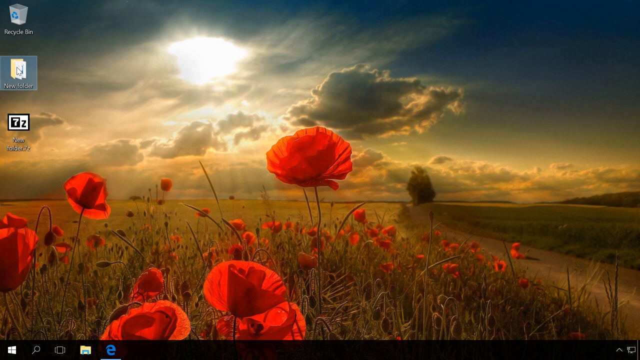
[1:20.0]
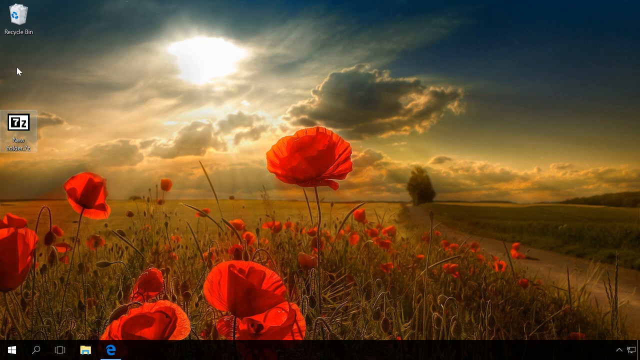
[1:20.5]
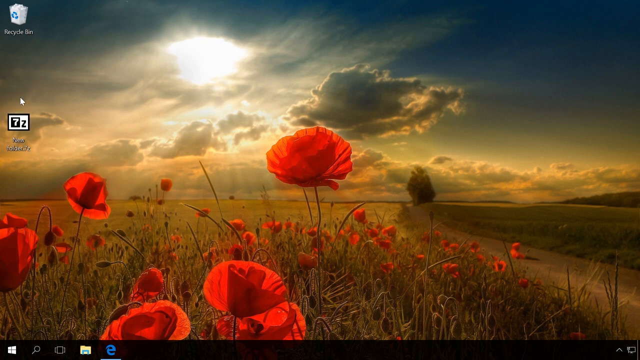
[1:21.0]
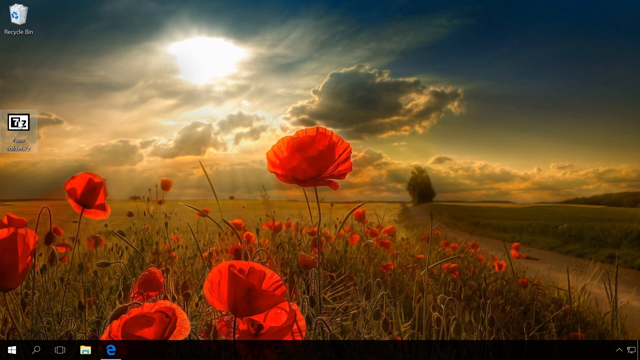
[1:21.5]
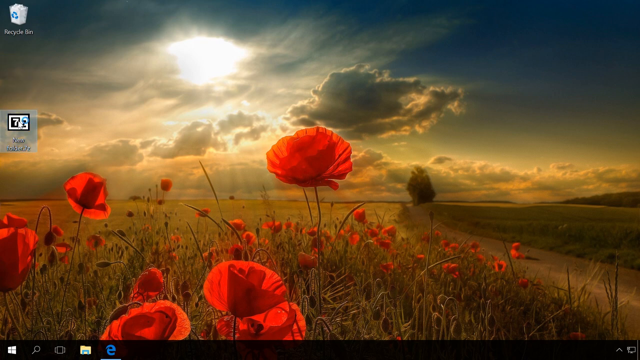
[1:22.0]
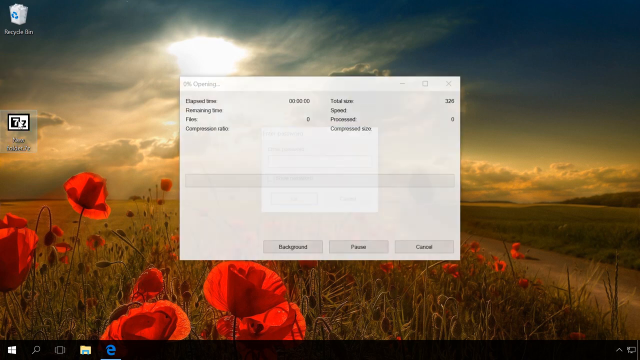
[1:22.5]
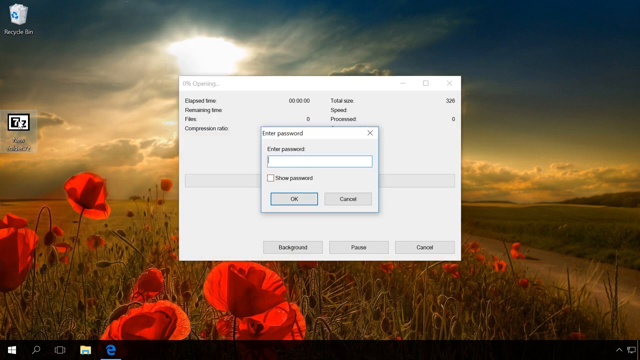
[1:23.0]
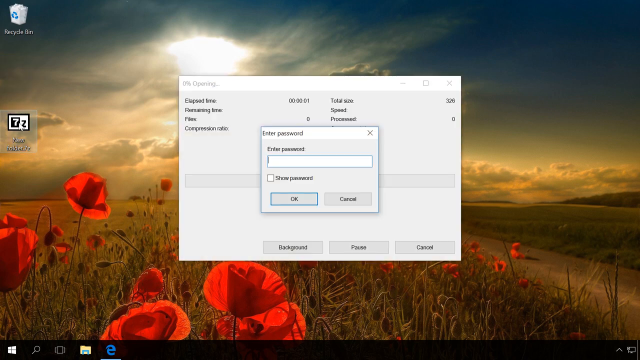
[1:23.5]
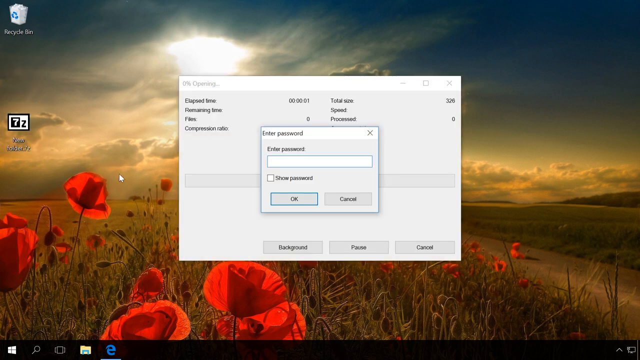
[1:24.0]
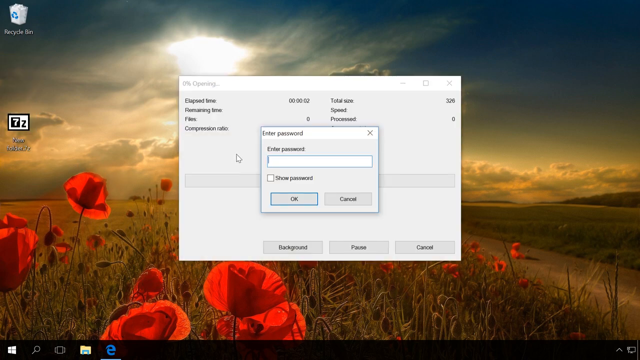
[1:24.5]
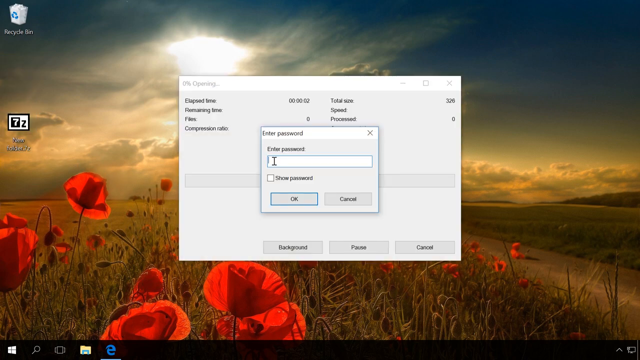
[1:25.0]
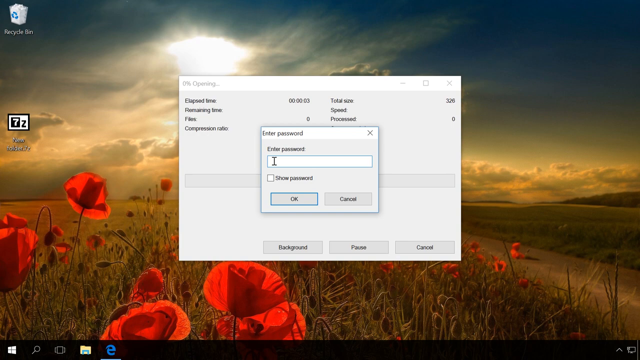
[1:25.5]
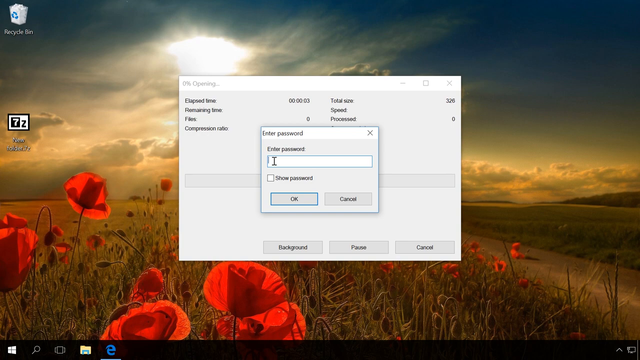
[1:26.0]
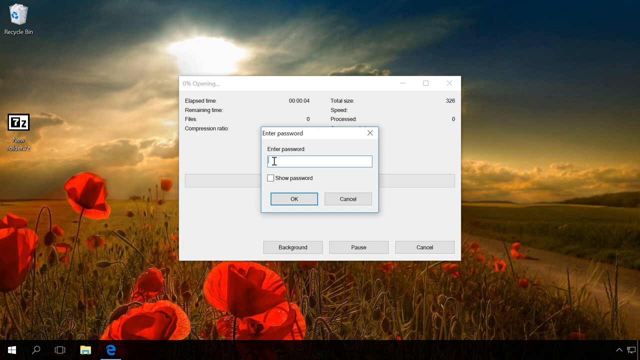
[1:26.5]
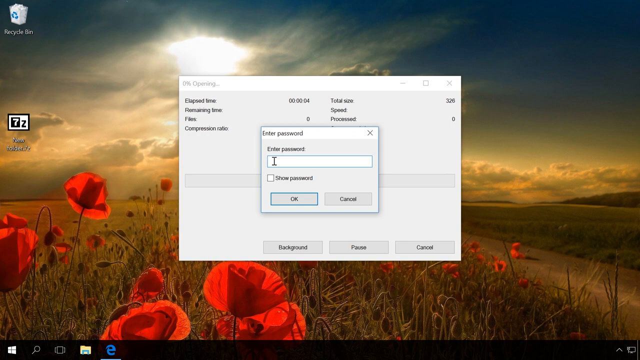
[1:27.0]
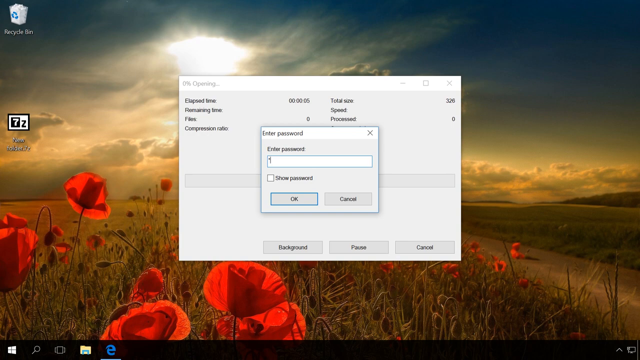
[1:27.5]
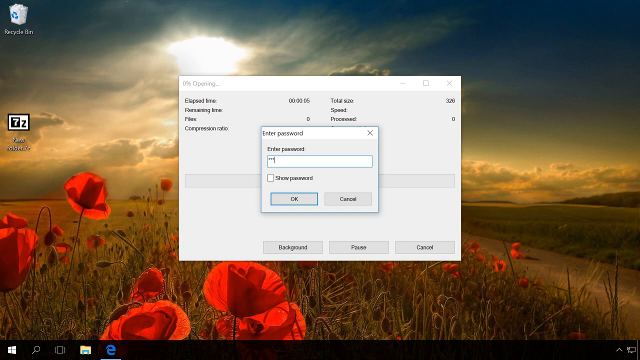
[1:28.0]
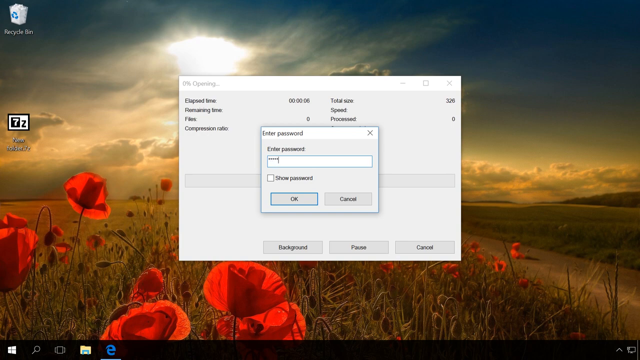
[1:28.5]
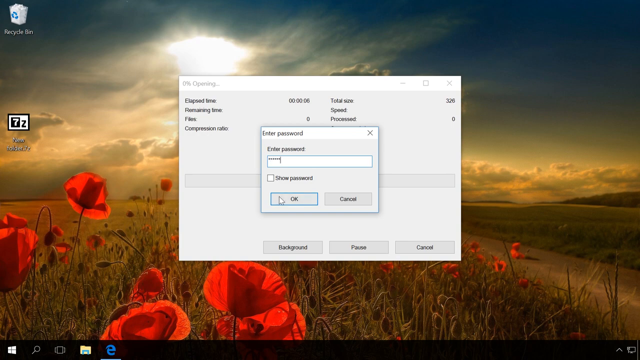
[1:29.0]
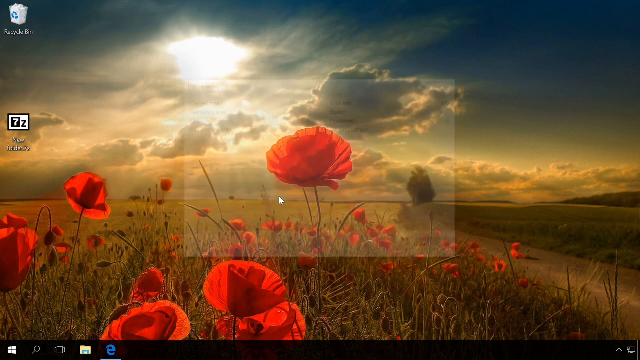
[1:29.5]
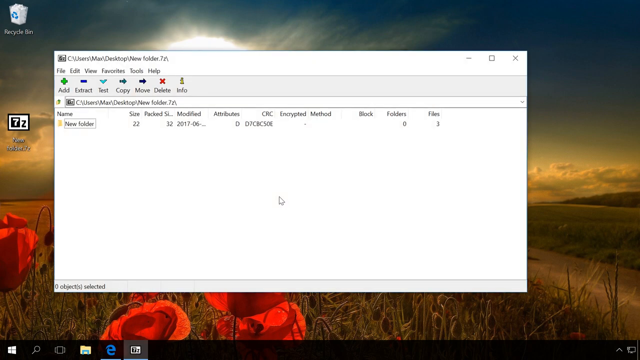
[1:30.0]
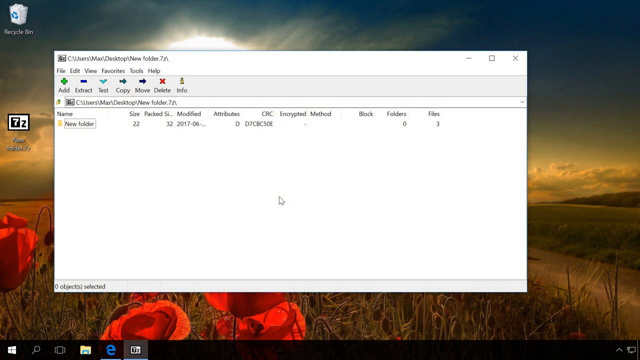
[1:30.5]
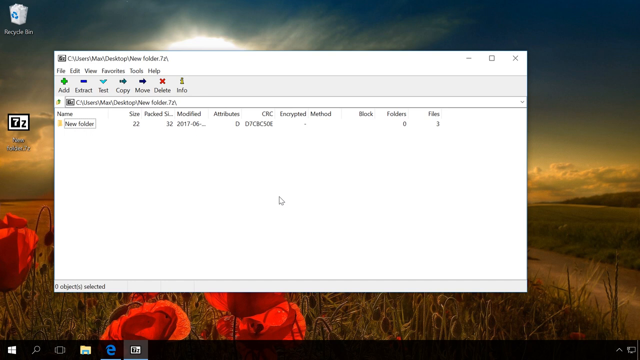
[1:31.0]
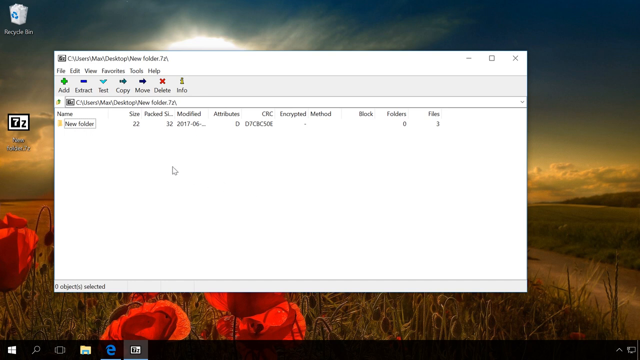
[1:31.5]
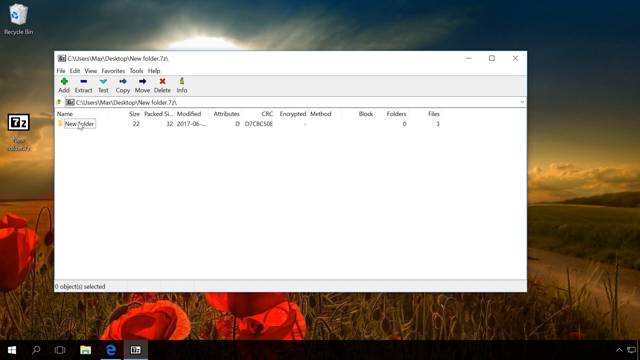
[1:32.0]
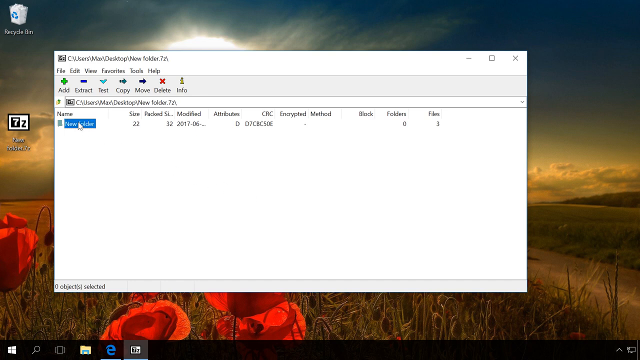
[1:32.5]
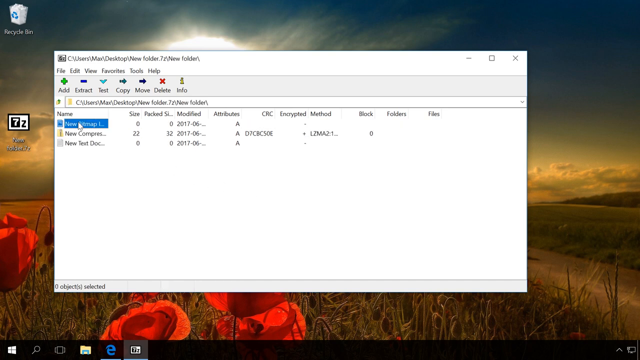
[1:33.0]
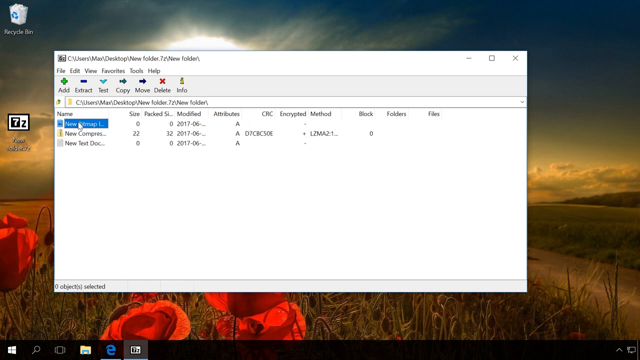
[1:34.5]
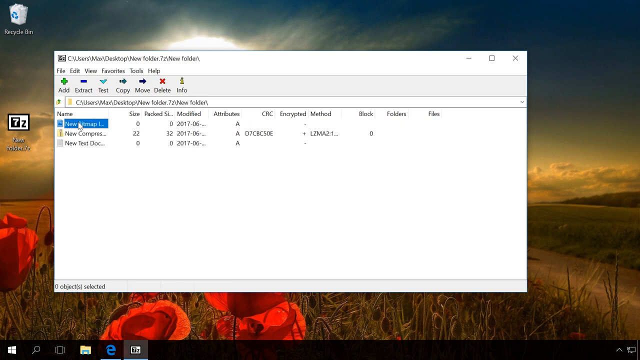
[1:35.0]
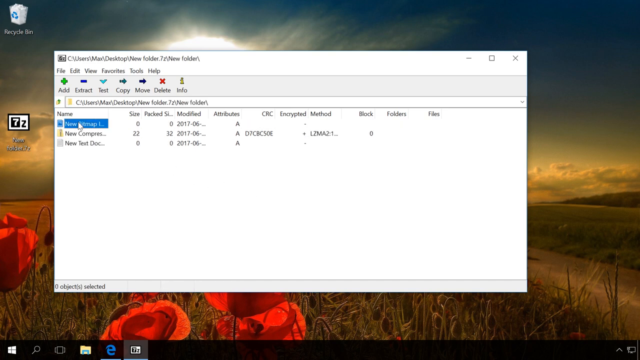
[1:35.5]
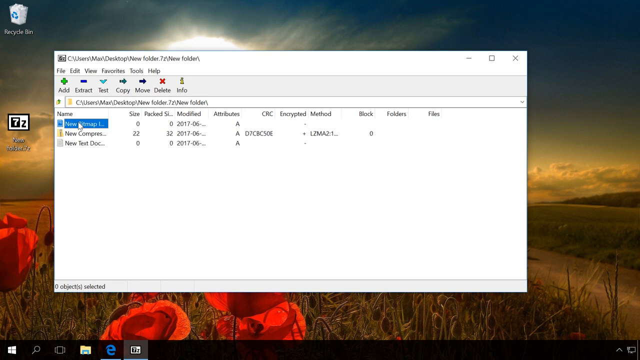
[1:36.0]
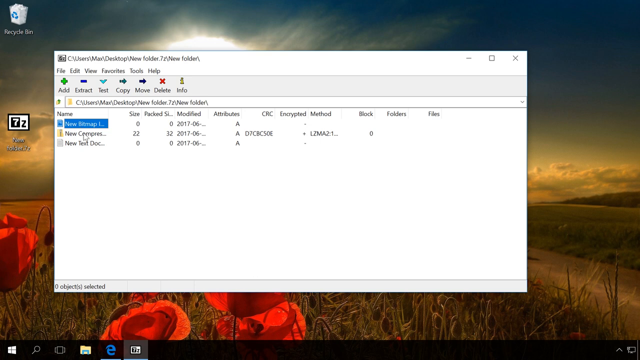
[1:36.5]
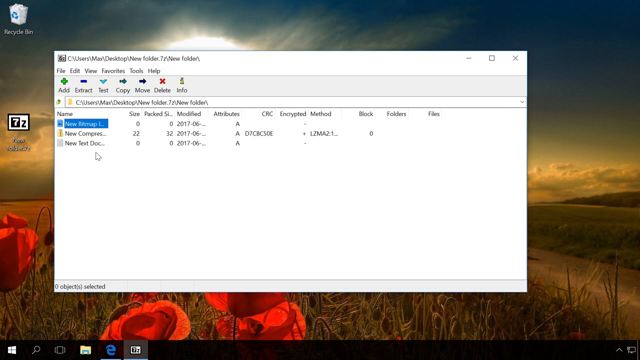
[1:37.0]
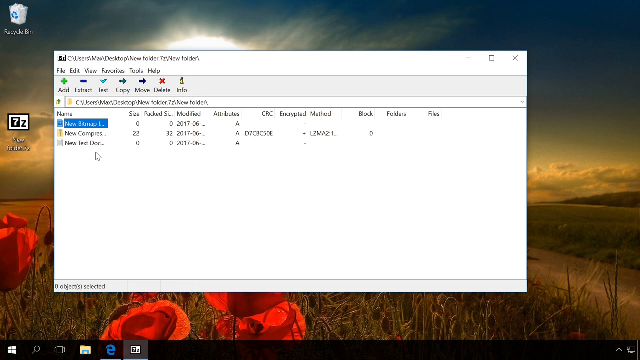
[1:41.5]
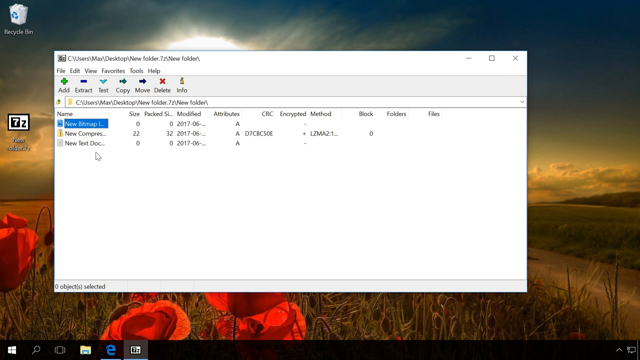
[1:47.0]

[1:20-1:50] The home screen shows the Recycle Bin, New Folder and New Folder 7Z. The cursor clicks, and the new folder disappears, possibly deleted. New Folder 7Z is clicked, bringing up a small window with options: a short box for entering a password, and below it OK and Cancel. The cursor goes to the password box and types a password, which is not visible. A folder then opens with the address bar showing "C, Users, Macs, Desktop, New Folder 7Z" along with various other symbols. The details show the name "New Folder", size "22", packed size "30", a modified date starting "2017-06", and attributes "D", with some further entries along the top. The cursor moves over and clicks on New Folder, bringing up two further lines below: a yellow folder named "new compress..." and, below it, a gray folder named "new text doc...". The cursor moves to just below those names and settles there.